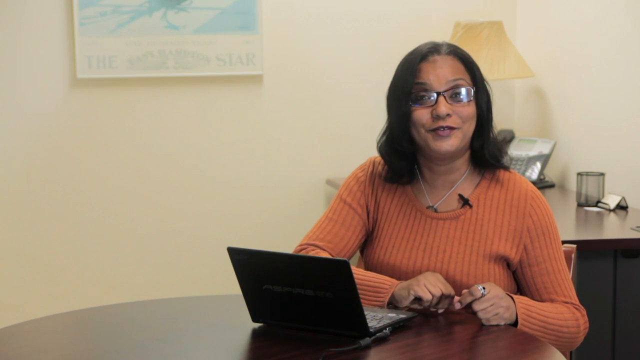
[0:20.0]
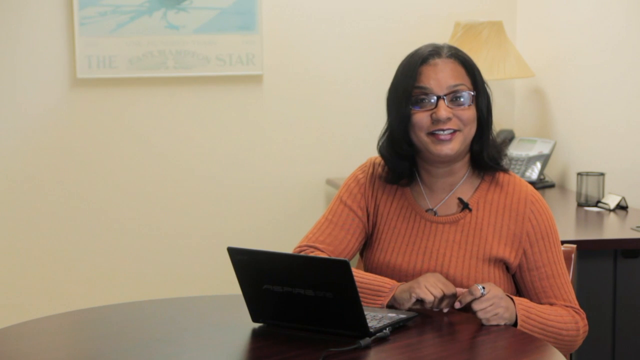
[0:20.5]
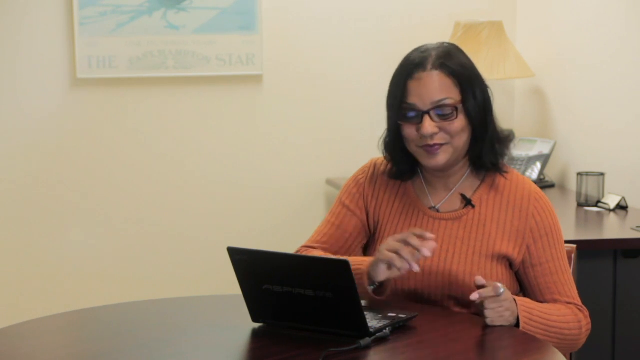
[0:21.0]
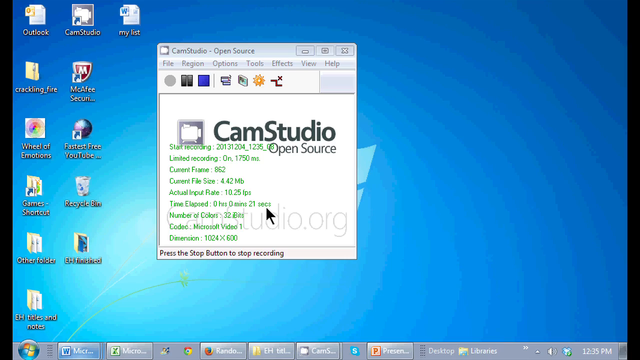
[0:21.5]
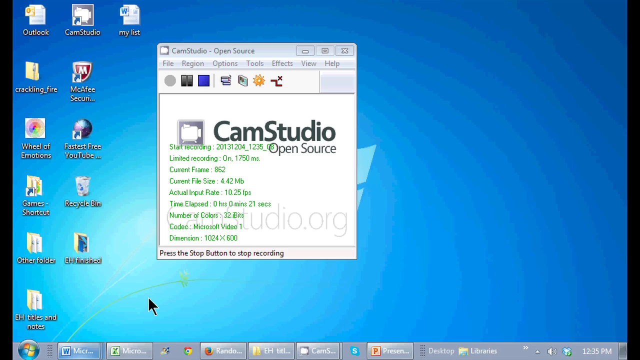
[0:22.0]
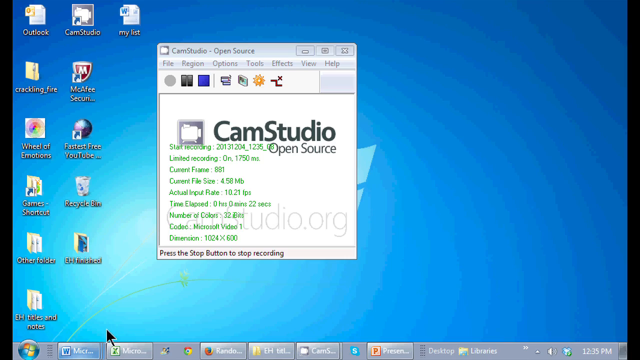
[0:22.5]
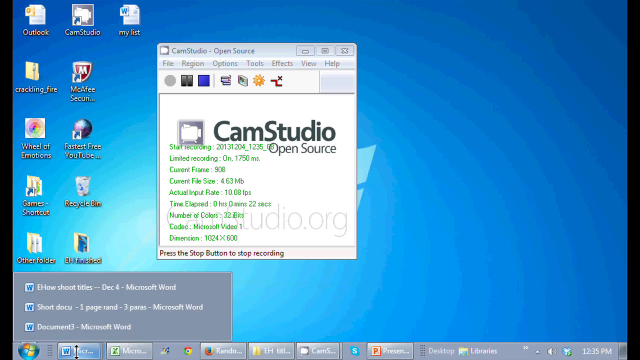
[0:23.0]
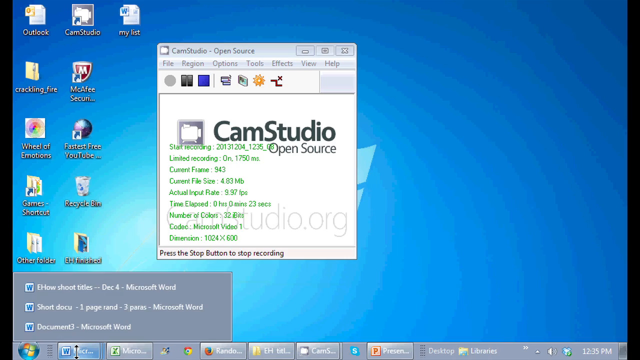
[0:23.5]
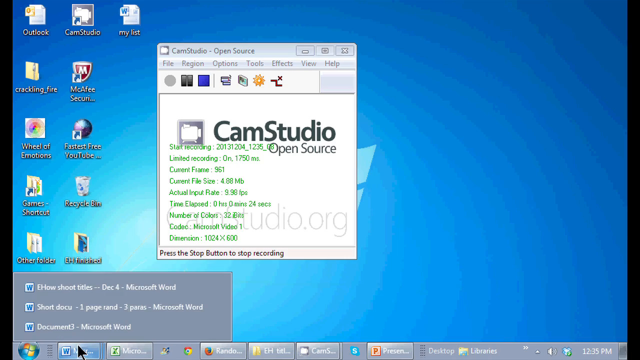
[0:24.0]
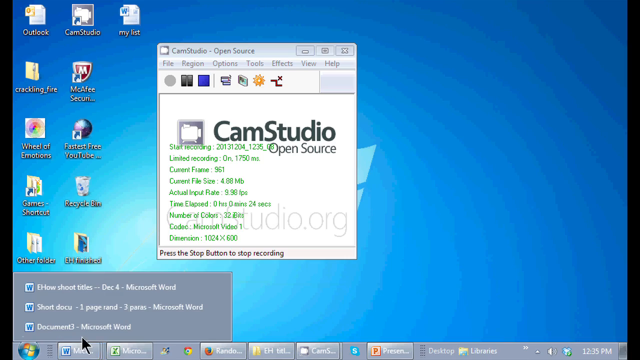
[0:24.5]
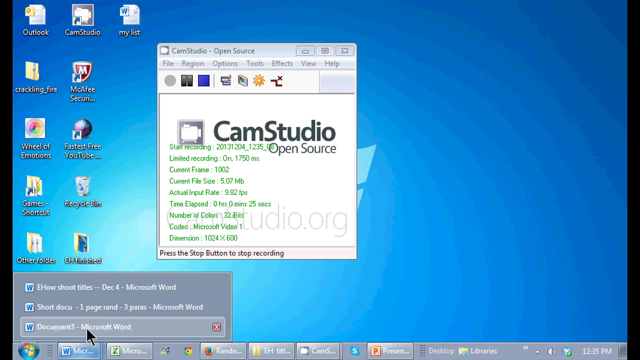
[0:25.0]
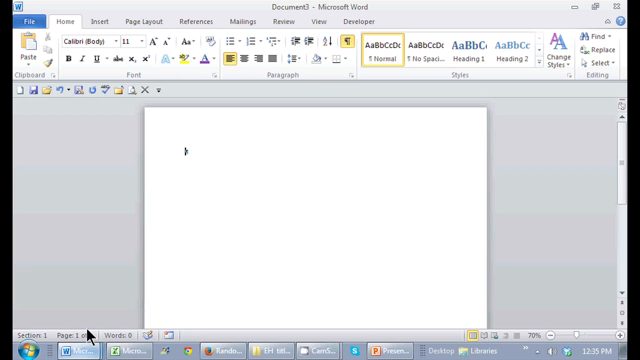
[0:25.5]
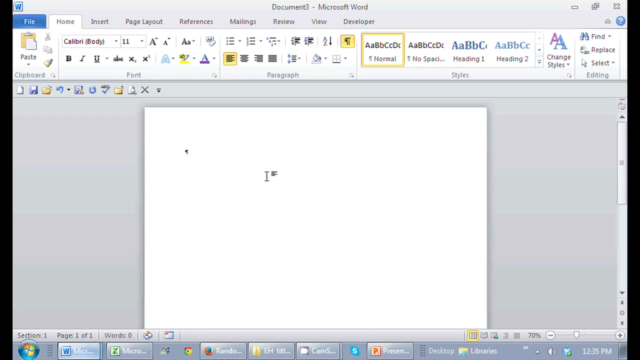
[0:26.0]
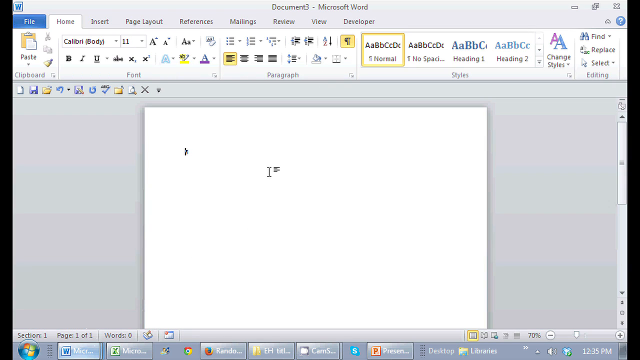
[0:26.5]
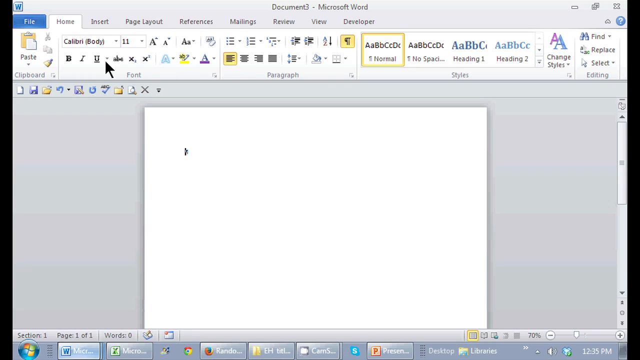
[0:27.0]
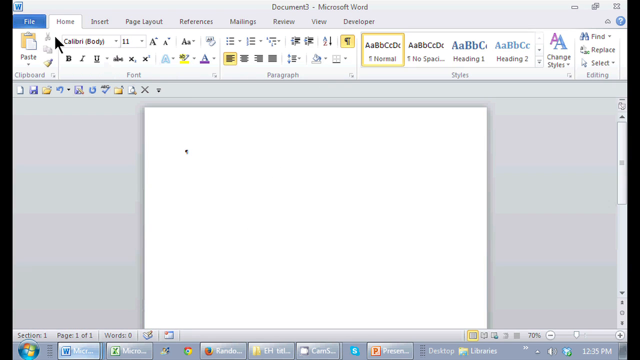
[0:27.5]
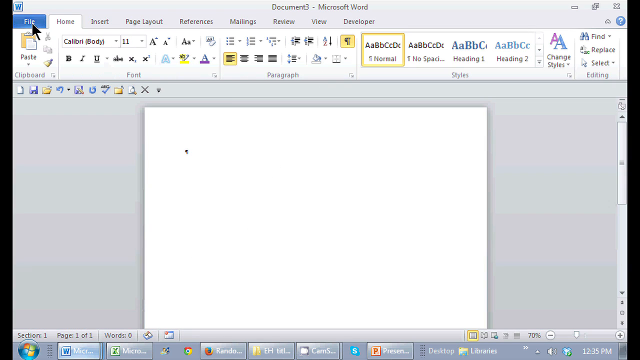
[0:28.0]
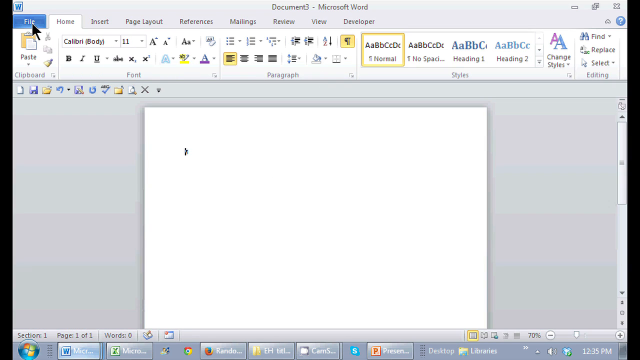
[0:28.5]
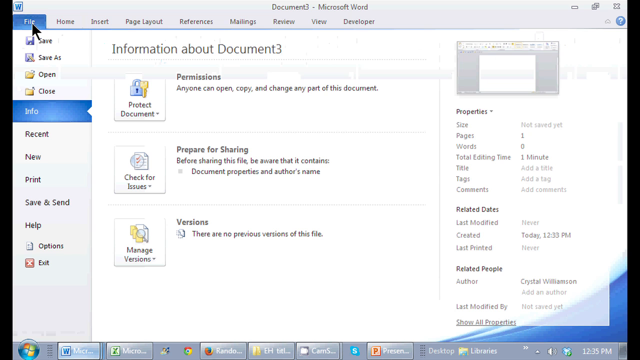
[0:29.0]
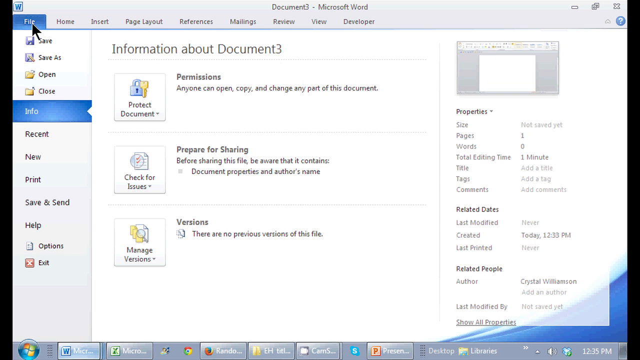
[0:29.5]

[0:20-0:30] The woman shows how to operate software on a laptop, something like a shortcut. She is still sitting in her office and smiling, with no one around her, only her and her laptop. She appears to be 40 to 50 years old, and her hair is short. There is apparently a desk with a telephone and an empty glass. She has a ring. She wears an orange top; what she wears below is not visible.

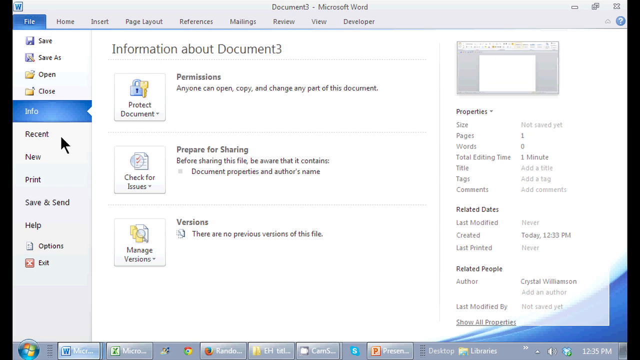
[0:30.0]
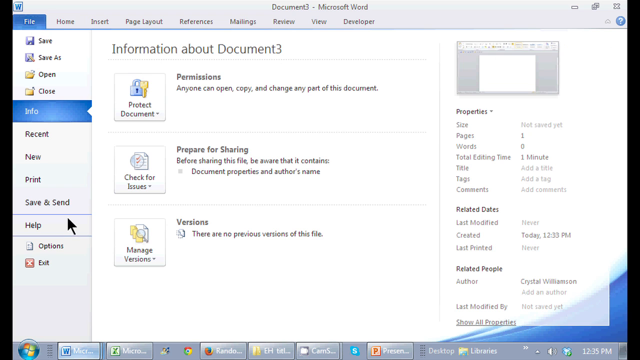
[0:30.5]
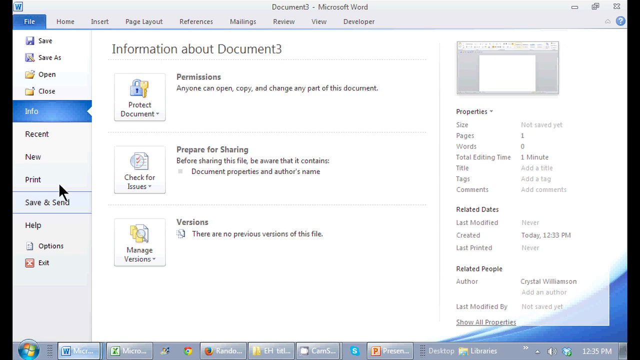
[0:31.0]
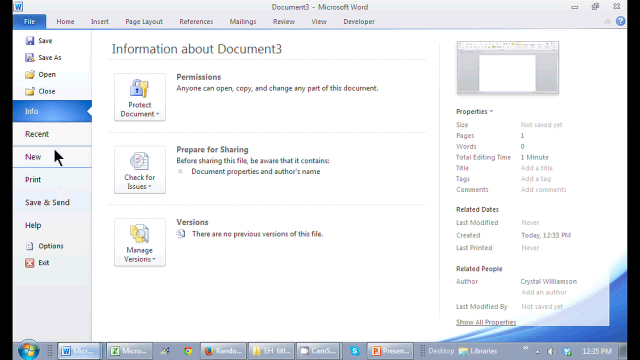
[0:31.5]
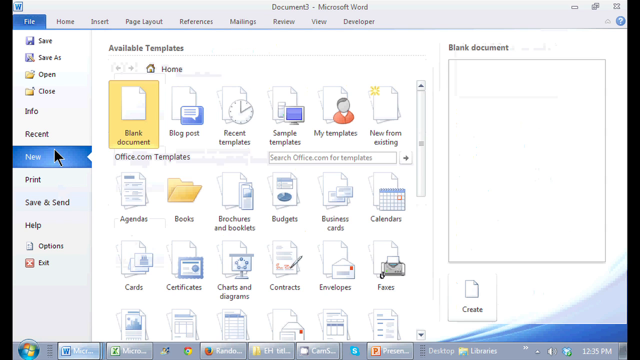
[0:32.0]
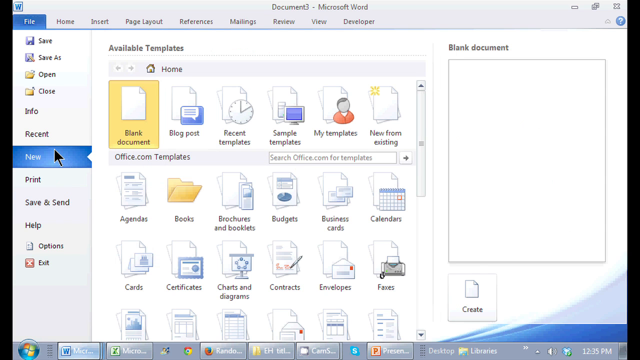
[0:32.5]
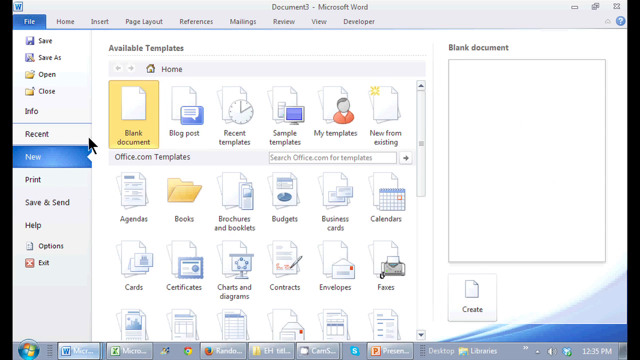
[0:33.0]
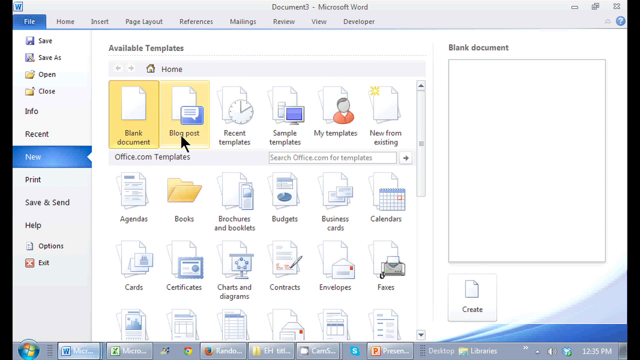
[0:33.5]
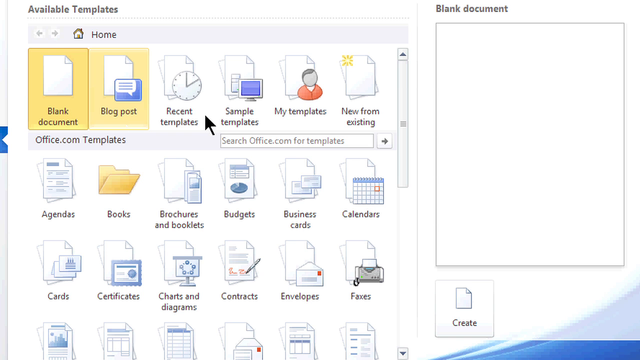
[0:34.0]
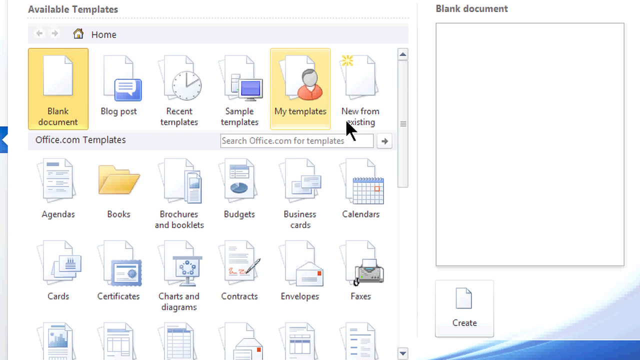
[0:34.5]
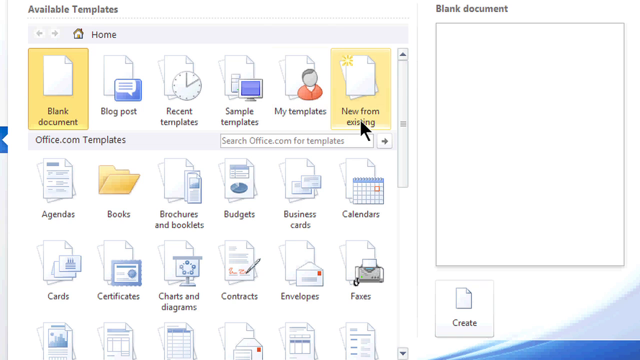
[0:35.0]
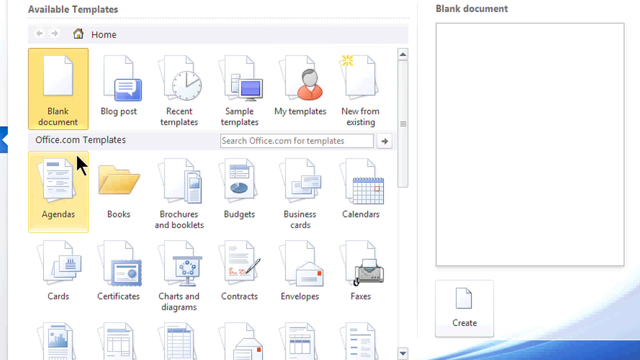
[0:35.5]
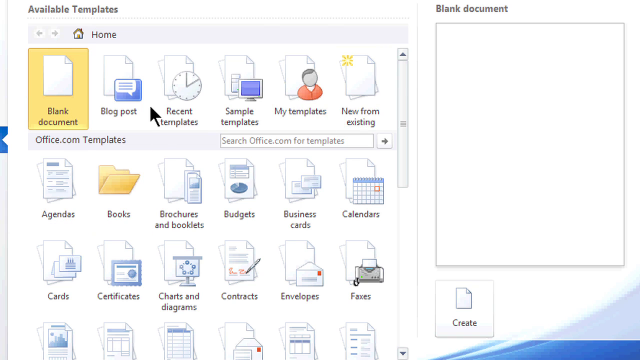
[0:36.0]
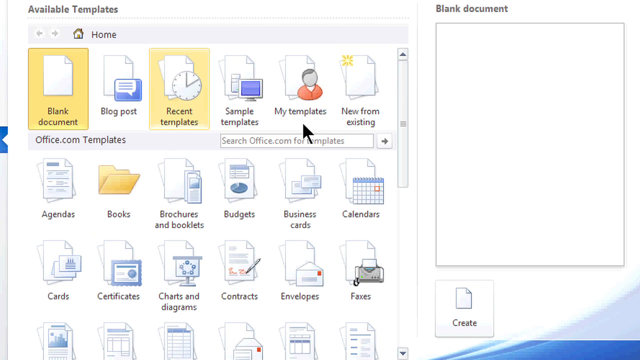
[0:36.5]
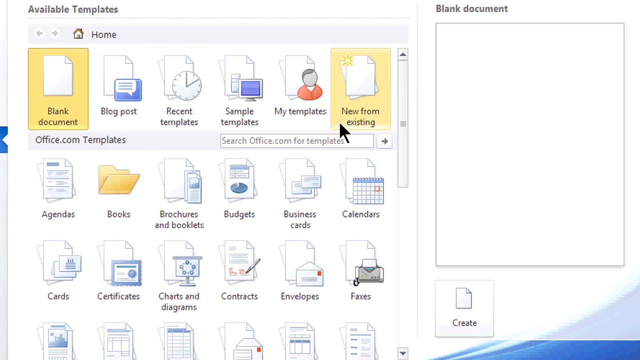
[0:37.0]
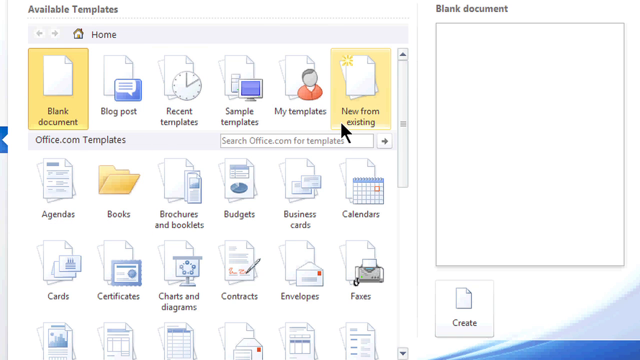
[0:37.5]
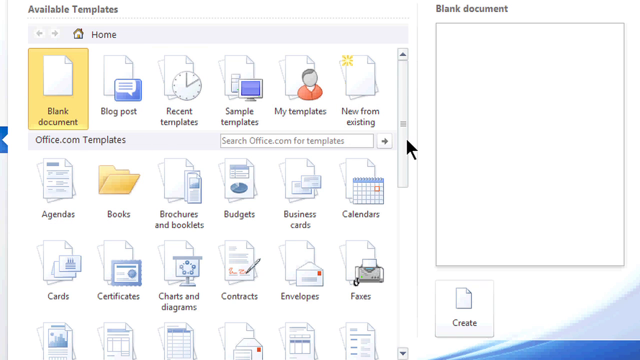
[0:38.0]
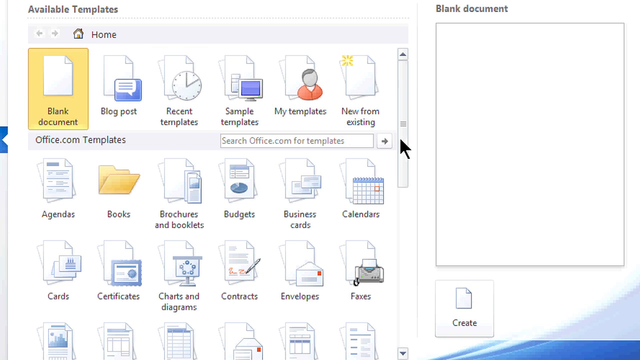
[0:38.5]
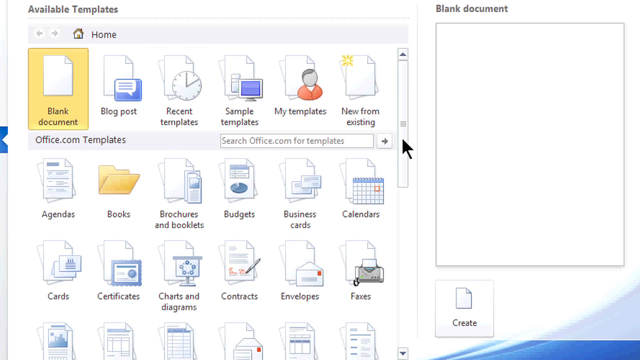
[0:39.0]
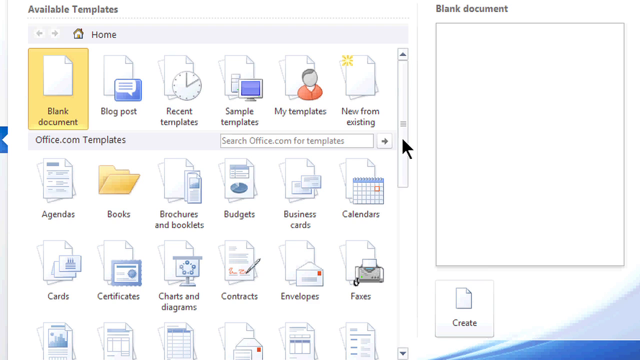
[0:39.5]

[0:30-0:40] The screen shows the computer as Williams demonstrates it, opening pages and showing how to operate it. She opens another page and shows how to find the pages to put folders in order. Only the computer screen is shown, with no animals, kids or other people.